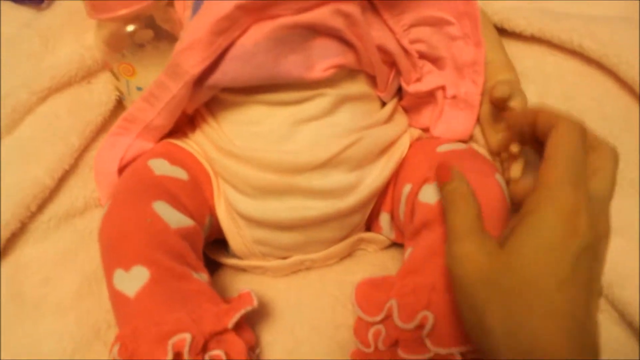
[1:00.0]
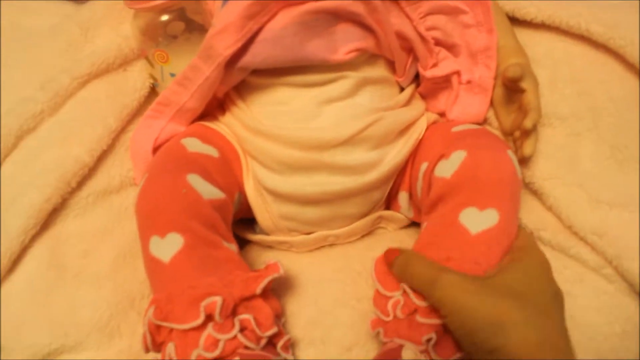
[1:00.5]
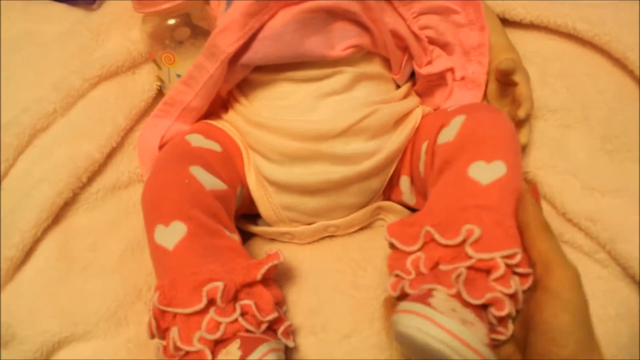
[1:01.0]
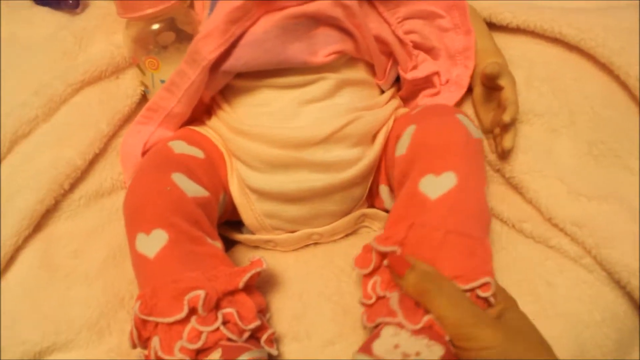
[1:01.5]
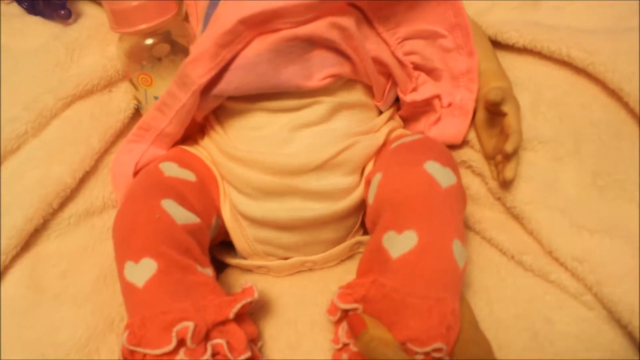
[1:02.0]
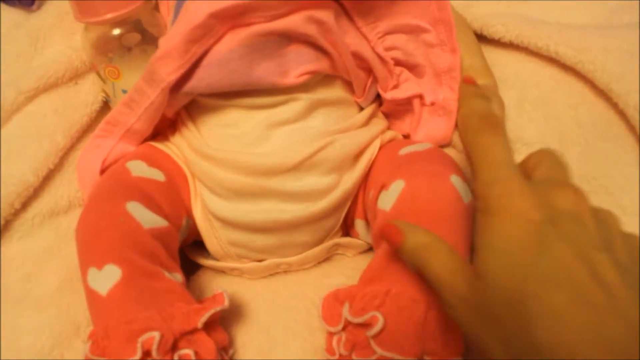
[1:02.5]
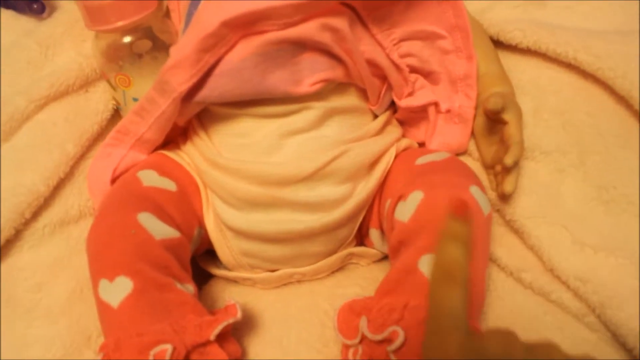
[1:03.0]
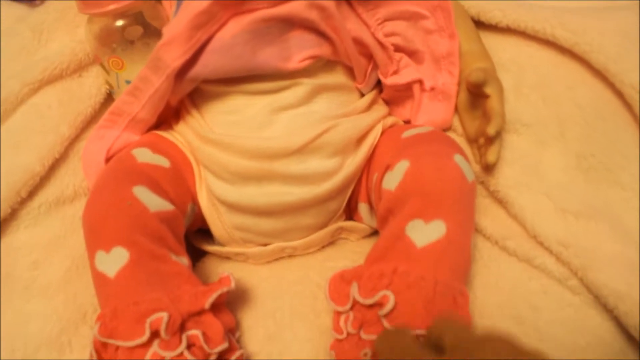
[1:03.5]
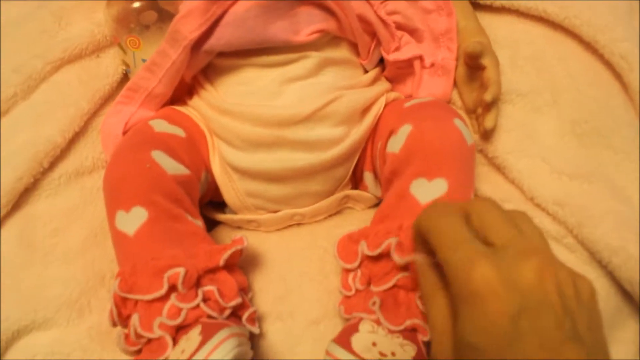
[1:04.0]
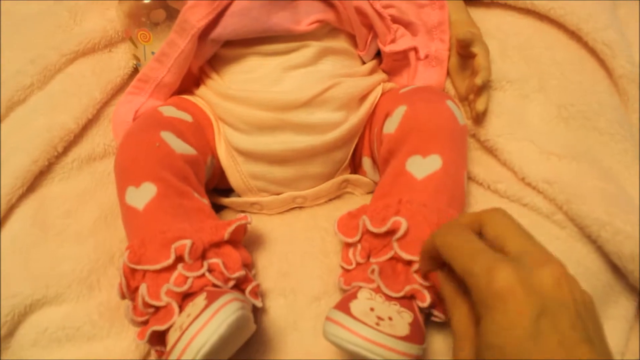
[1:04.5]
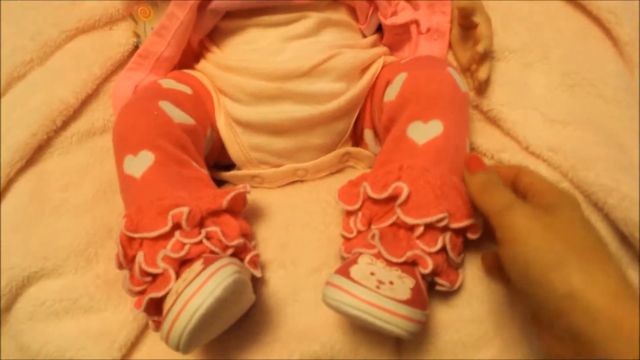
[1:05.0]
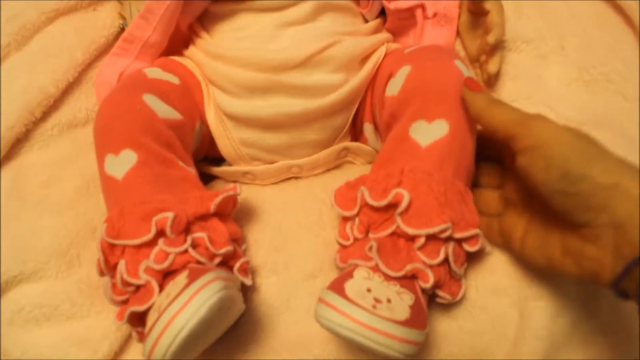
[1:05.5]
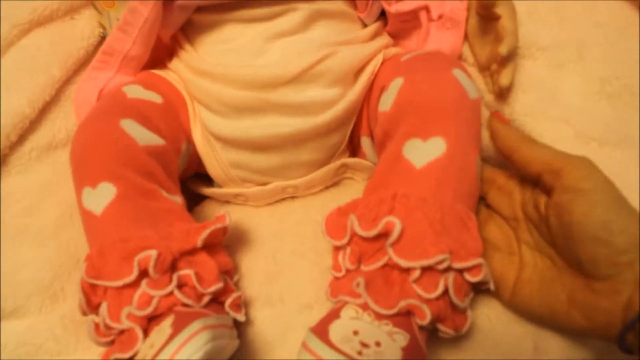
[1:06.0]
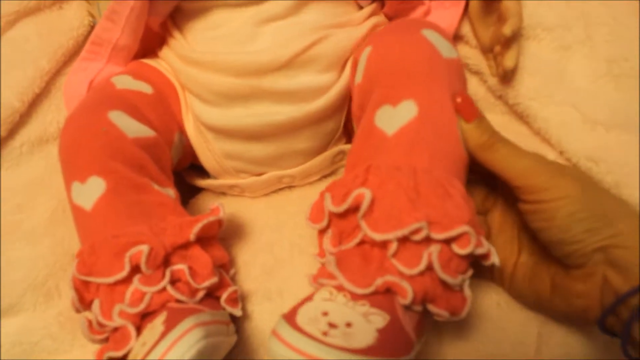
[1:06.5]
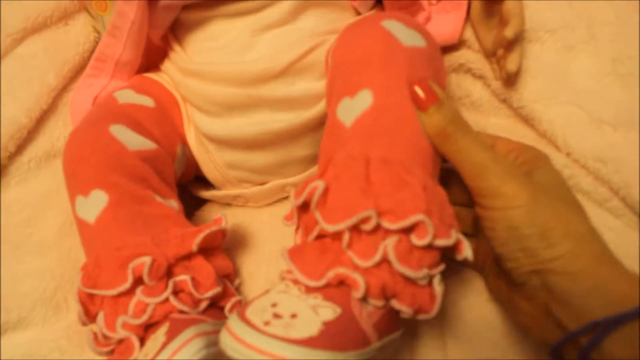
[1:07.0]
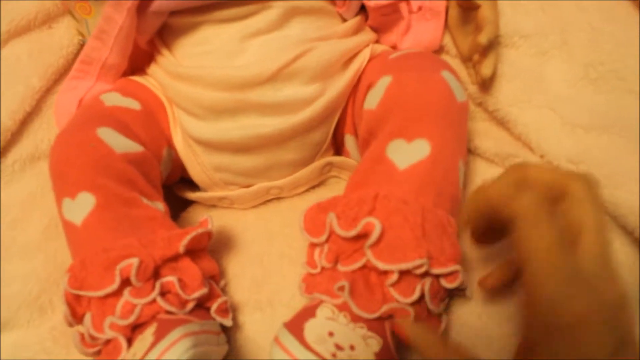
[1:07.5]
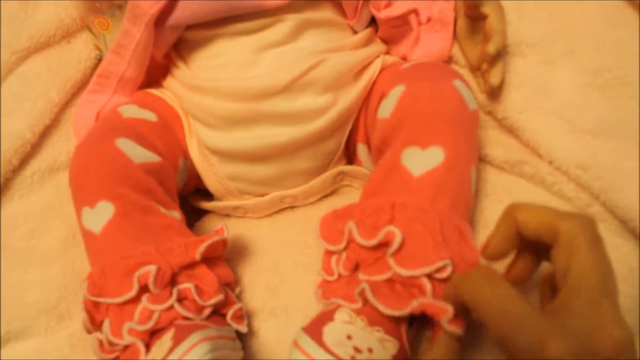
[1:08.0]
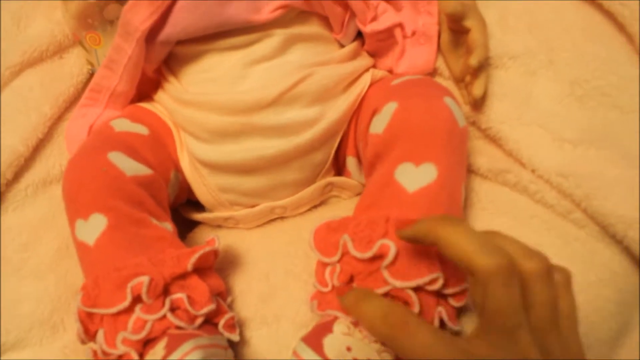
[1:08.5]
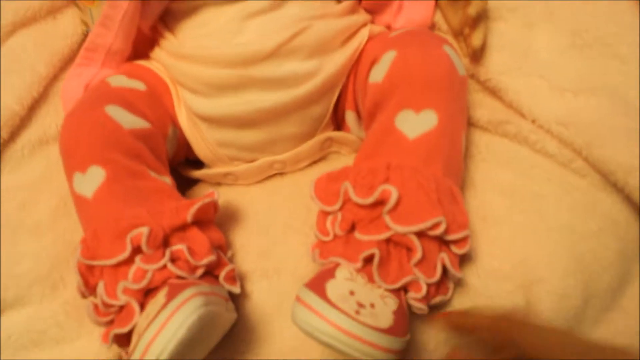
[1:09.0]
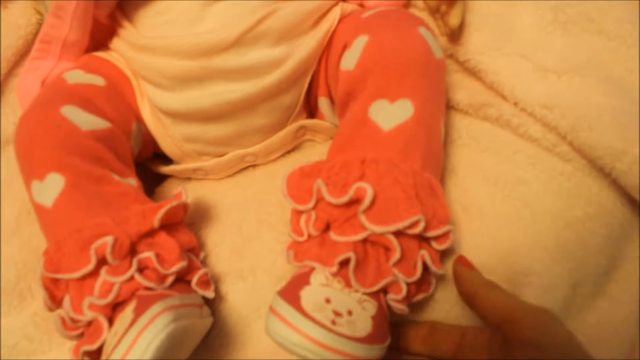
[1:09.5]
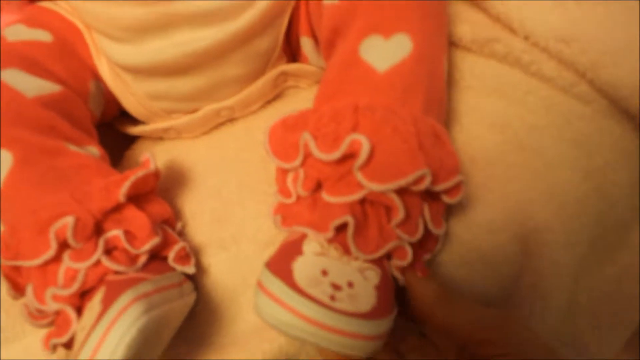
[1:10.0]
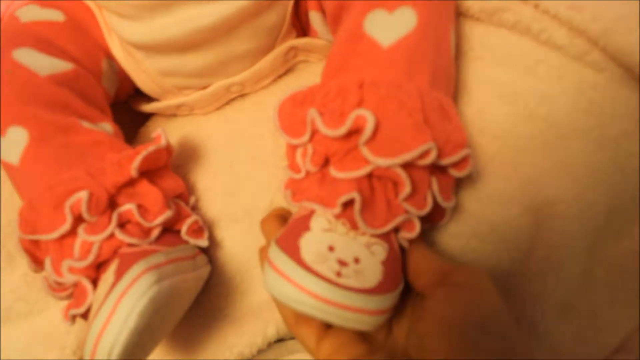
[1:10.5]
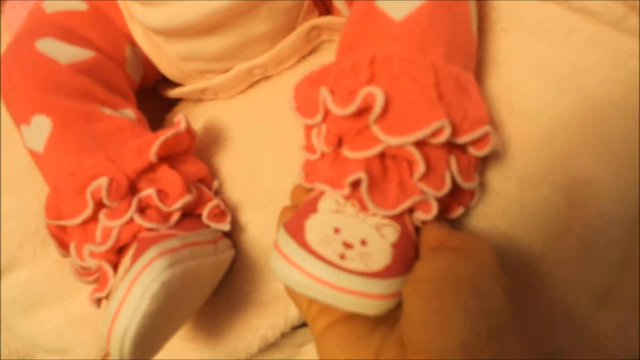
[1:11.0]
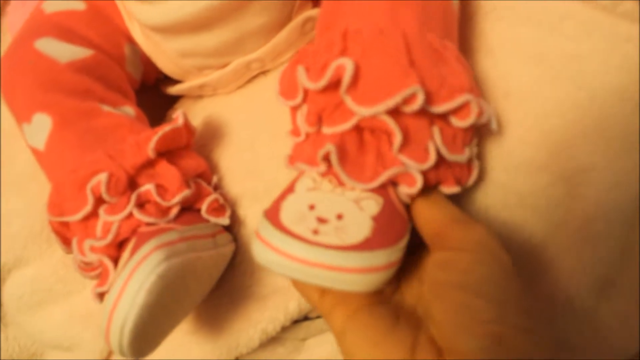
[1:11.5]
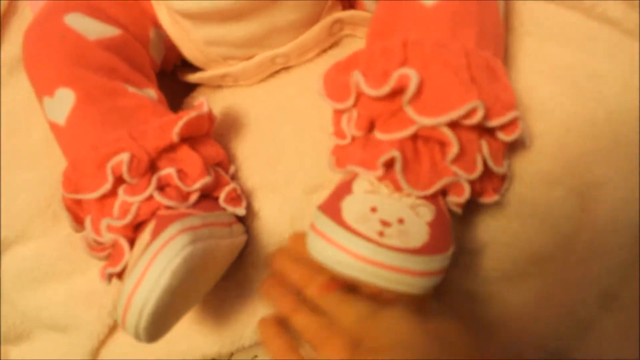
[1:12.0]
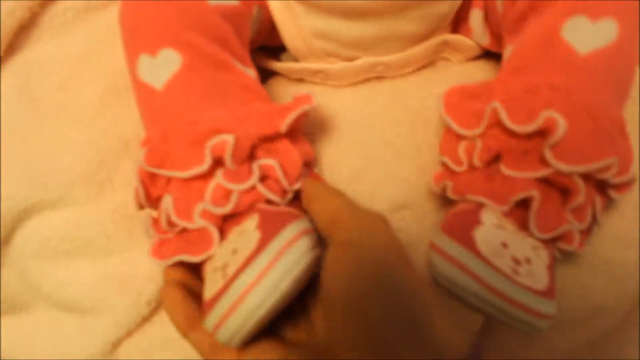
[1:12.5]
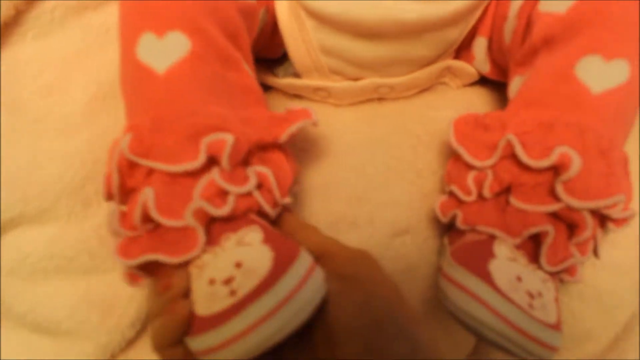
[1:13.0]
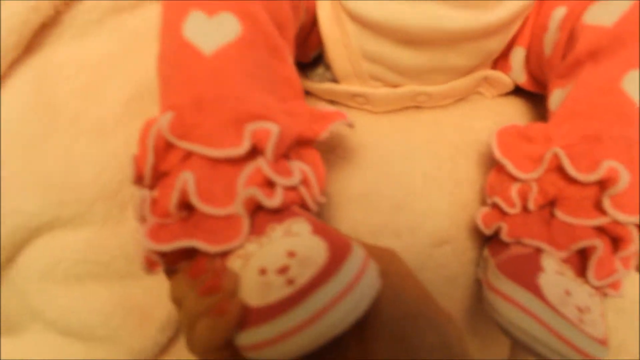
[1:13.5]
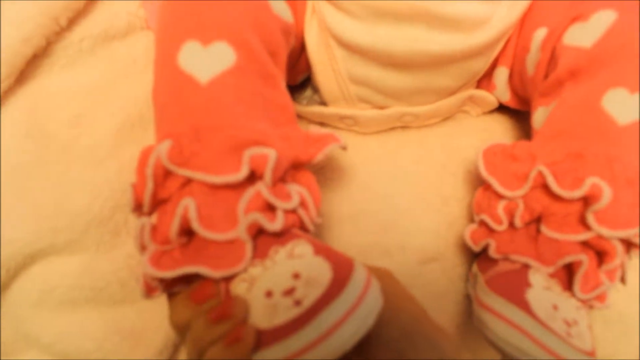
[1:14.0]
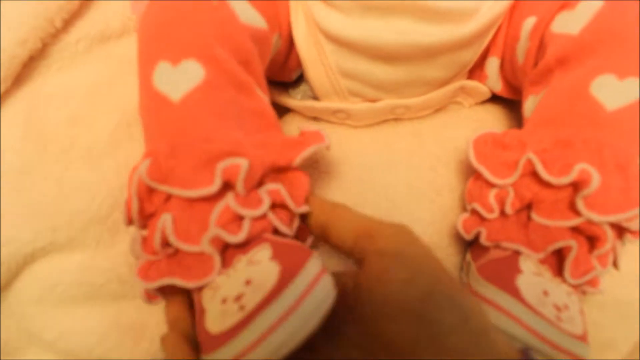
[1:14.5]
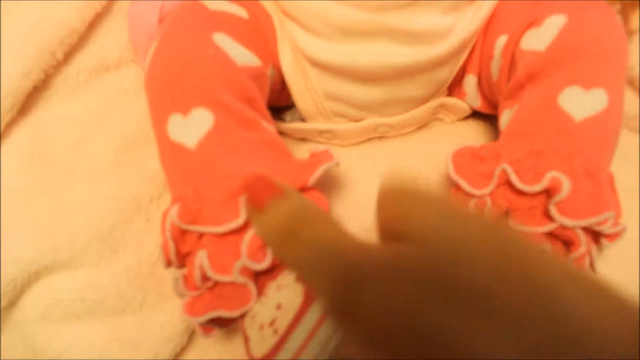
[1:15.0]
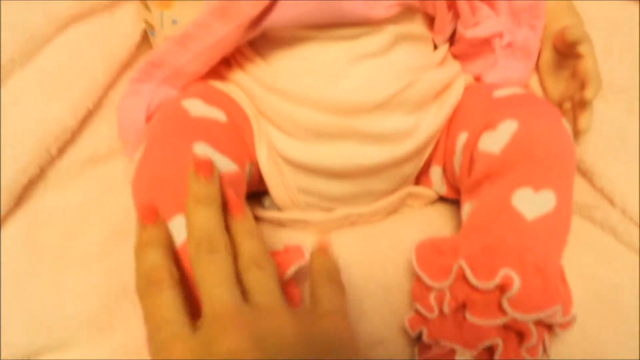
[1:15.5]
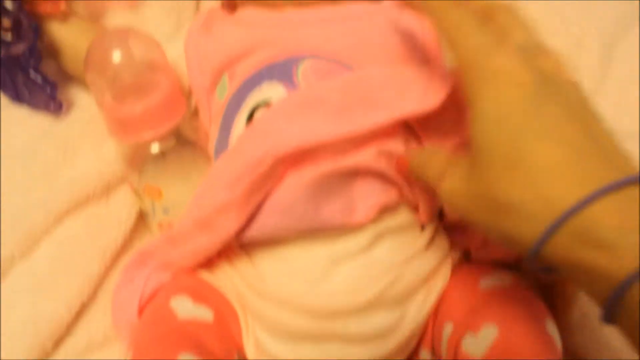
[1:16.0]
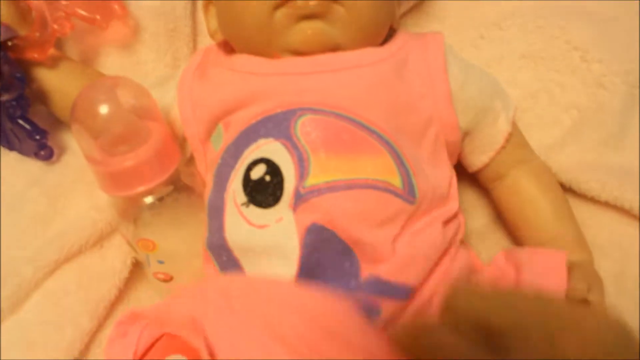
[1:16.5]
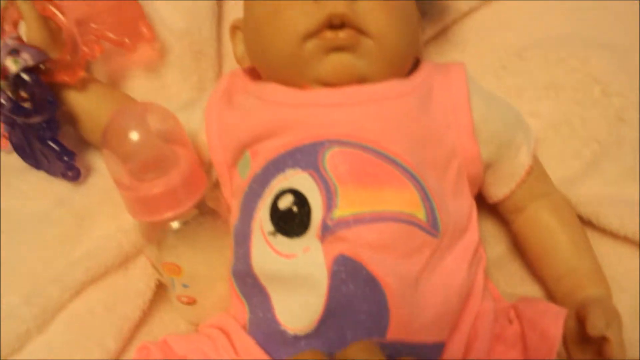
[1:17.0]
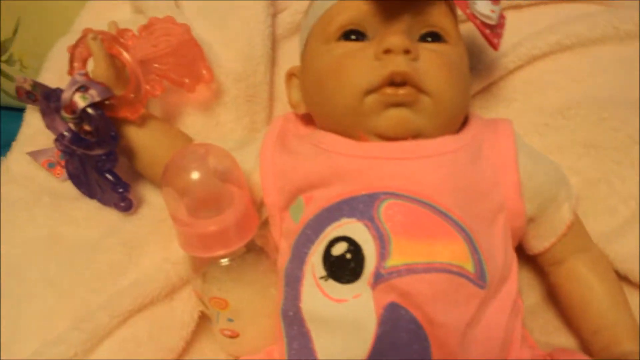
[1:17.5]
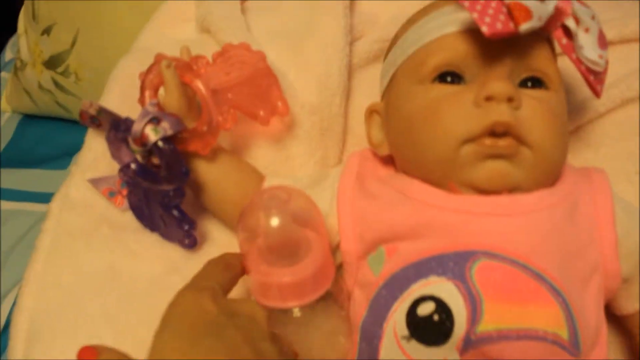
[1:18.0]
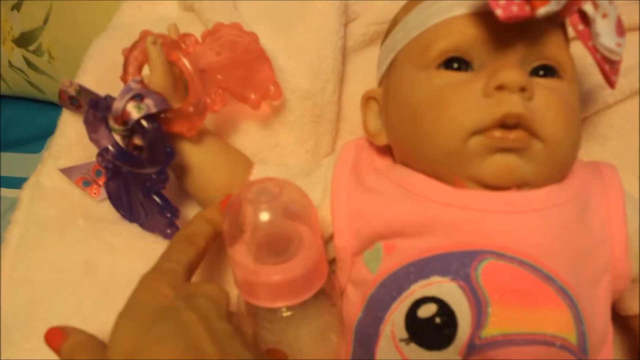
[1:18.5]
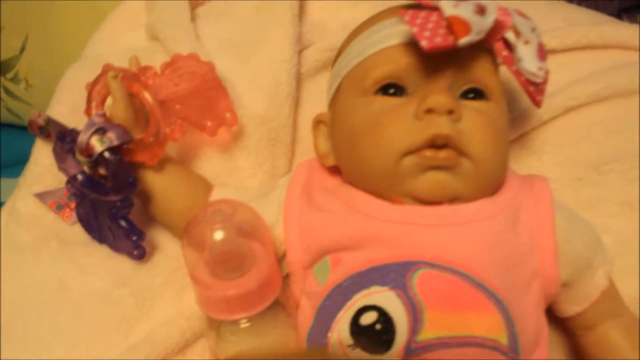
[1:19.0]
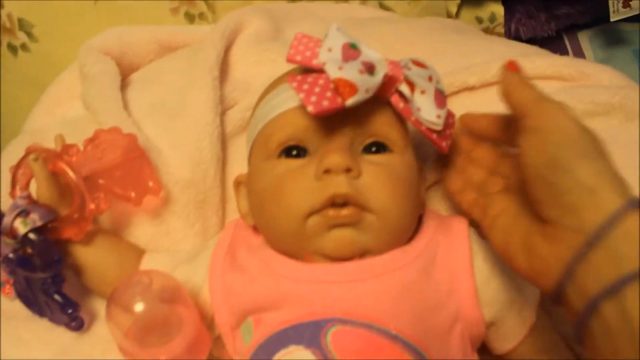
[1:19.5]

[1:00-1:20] The camera holder's hand goes over the baby doll and its clothes, showing off the pink socks and leg warmers with hearts on them and the material, then the pink shoes. They pull down the doll's pink dress, which has a purple flamingo on it. They go over the plastic bottle with milk in it and the doll's arm area, then move up to the pink bow and the white headband. They use their right hand, which has pink fingernails and bracelets on the wrist. The doll is on top of a blanket on a bed.